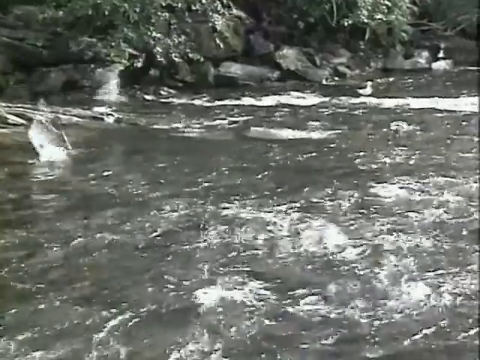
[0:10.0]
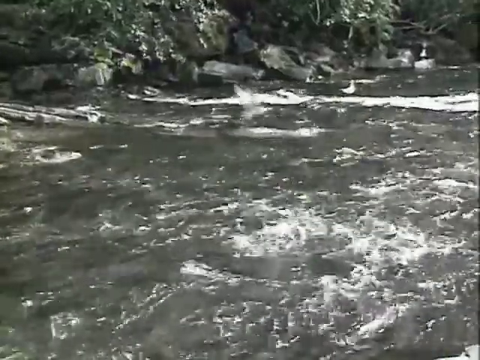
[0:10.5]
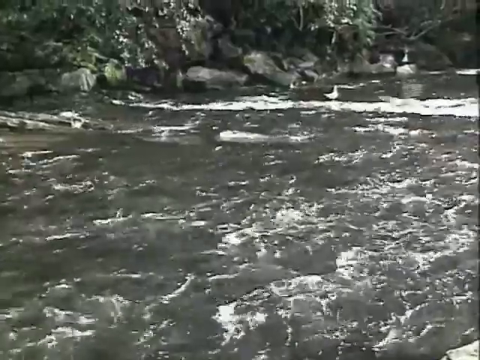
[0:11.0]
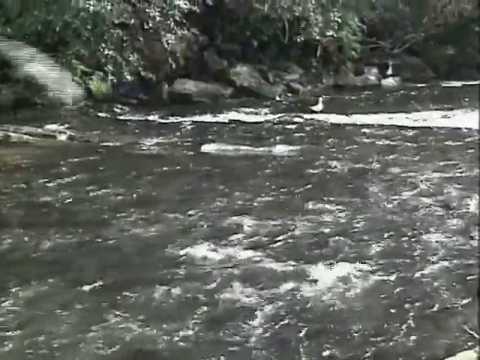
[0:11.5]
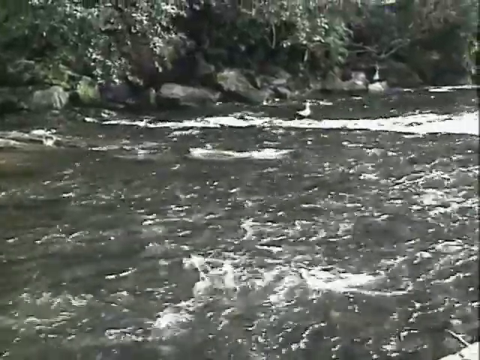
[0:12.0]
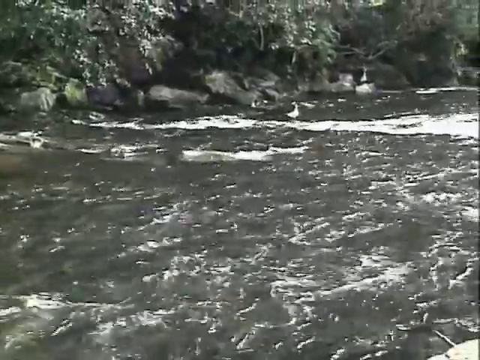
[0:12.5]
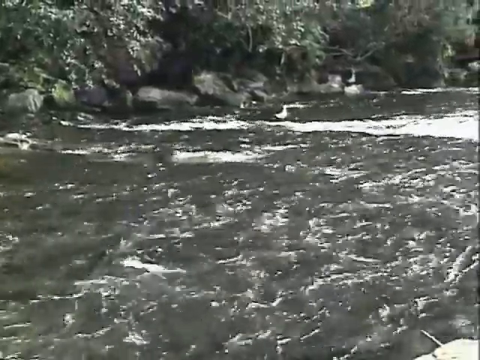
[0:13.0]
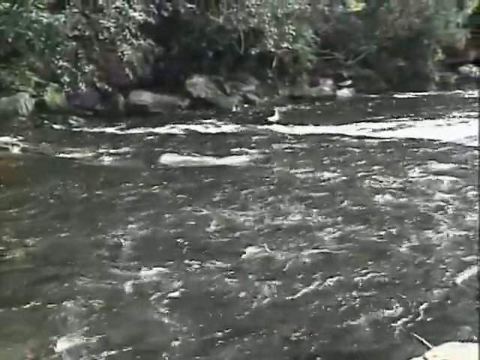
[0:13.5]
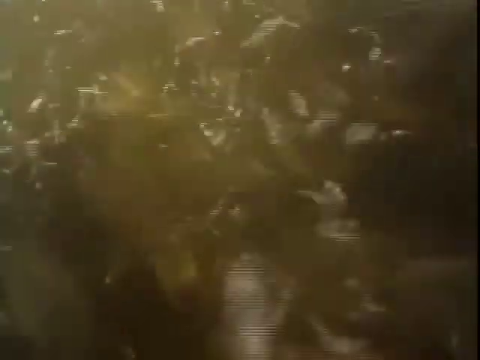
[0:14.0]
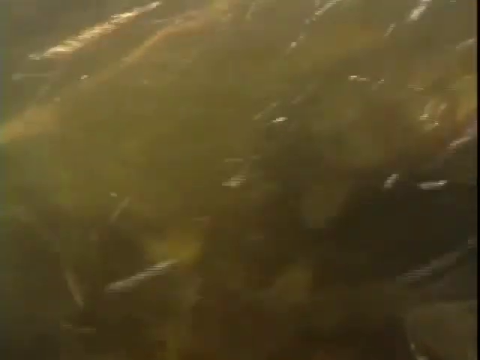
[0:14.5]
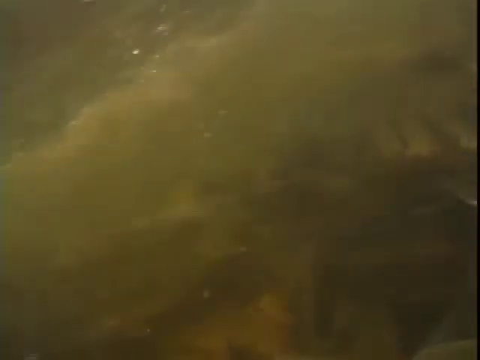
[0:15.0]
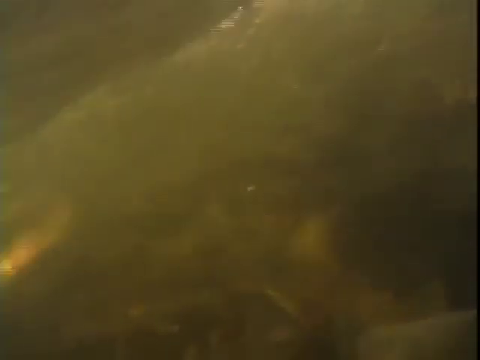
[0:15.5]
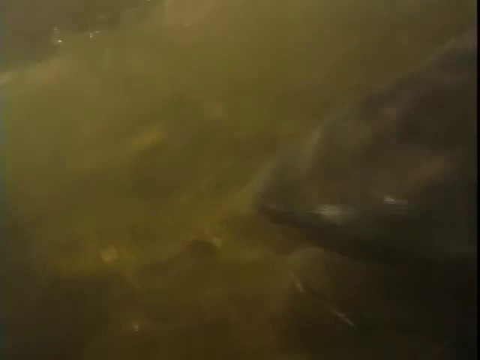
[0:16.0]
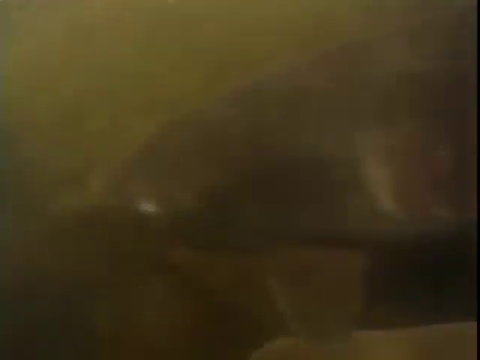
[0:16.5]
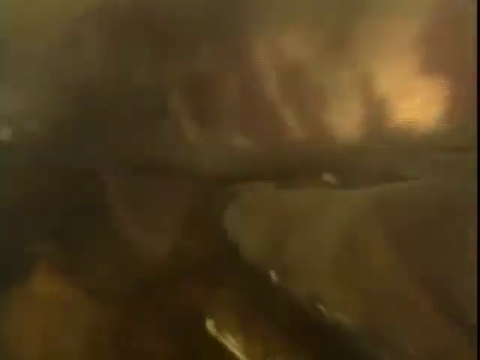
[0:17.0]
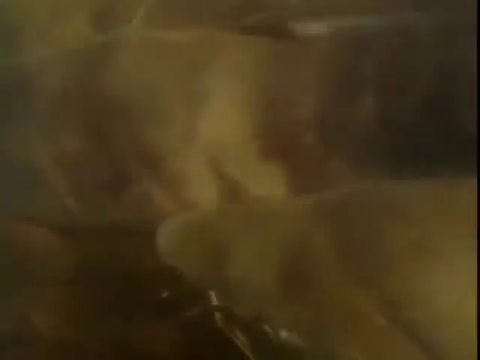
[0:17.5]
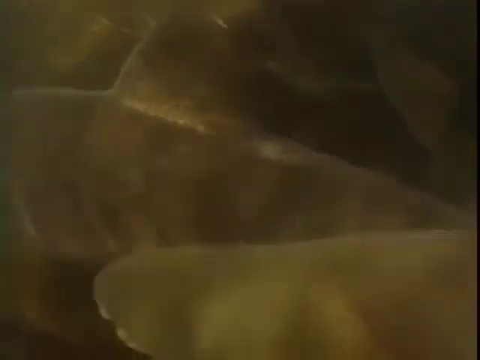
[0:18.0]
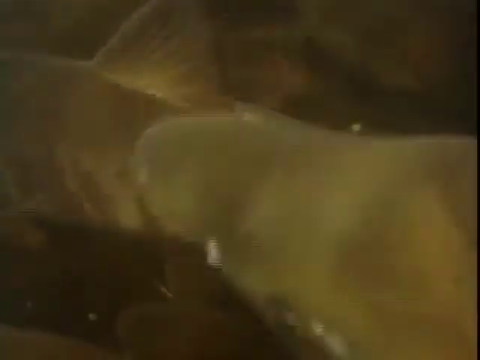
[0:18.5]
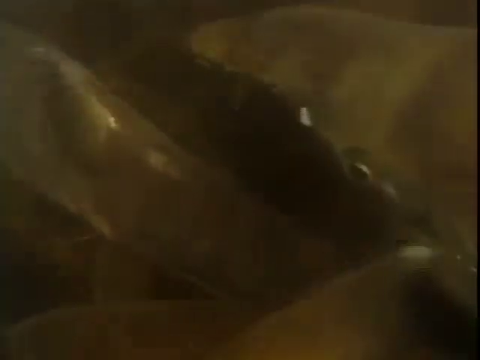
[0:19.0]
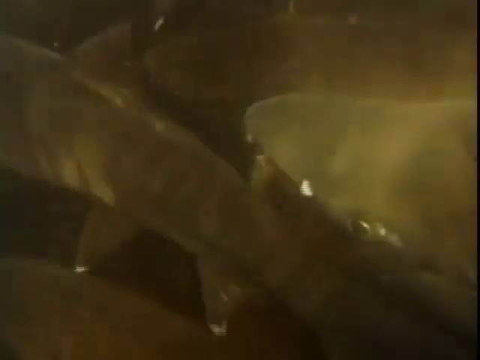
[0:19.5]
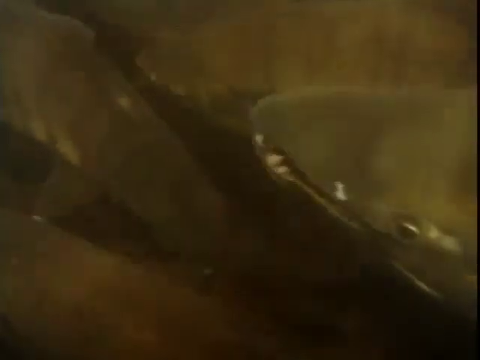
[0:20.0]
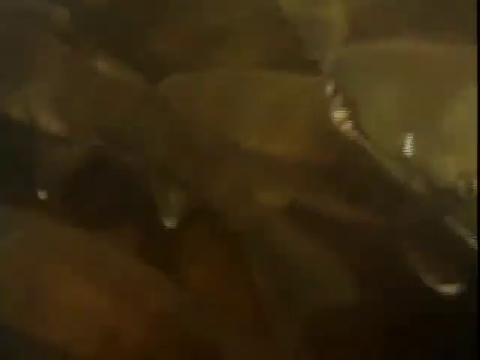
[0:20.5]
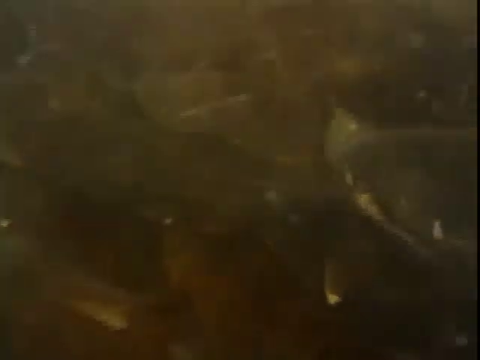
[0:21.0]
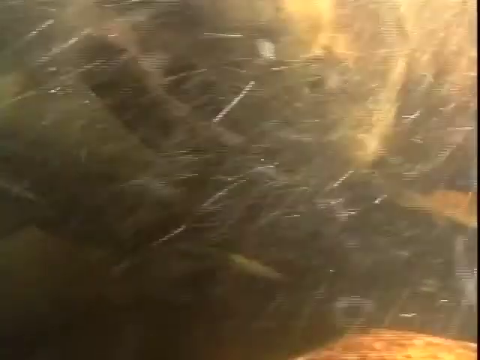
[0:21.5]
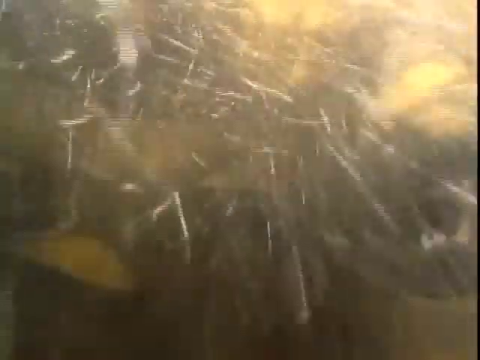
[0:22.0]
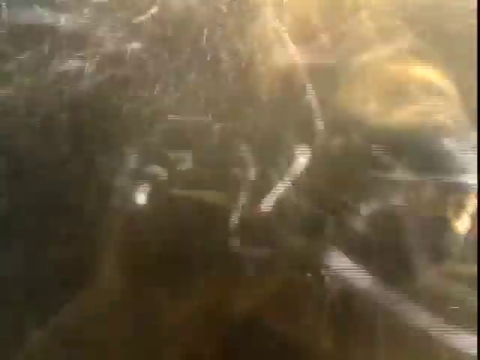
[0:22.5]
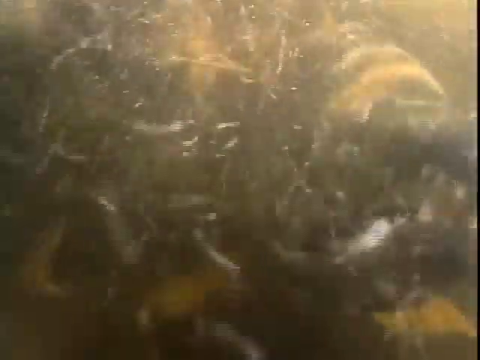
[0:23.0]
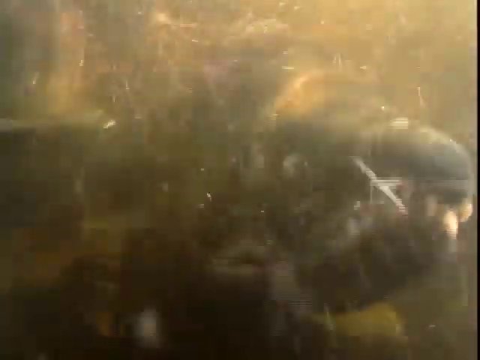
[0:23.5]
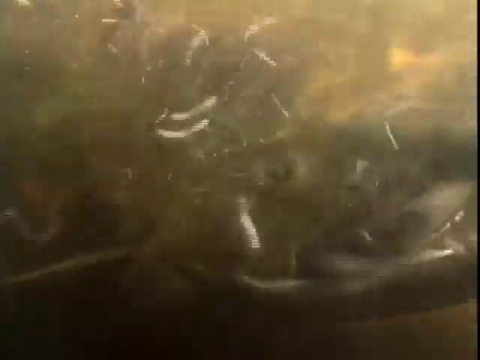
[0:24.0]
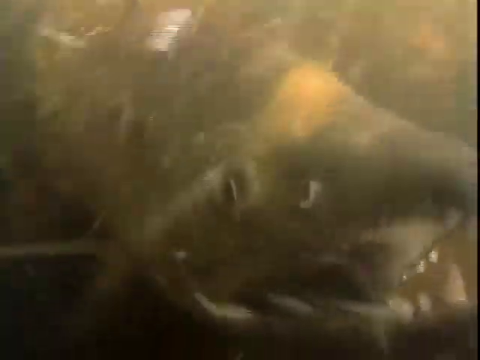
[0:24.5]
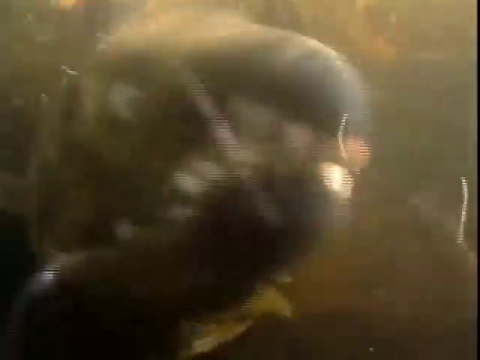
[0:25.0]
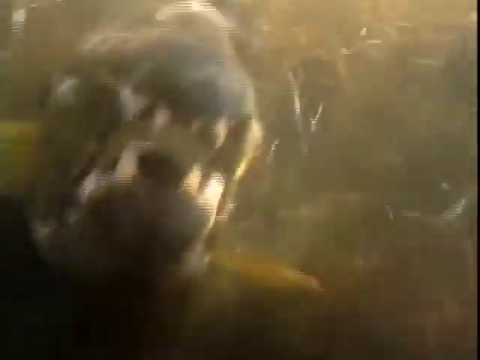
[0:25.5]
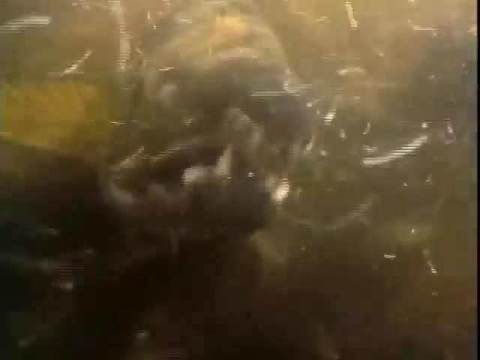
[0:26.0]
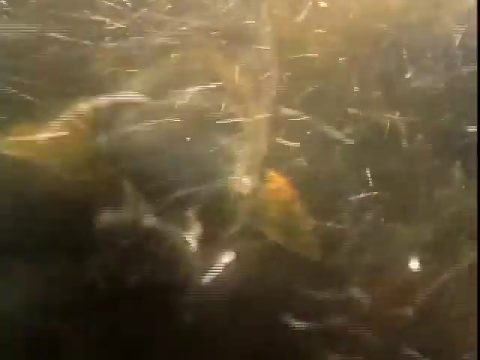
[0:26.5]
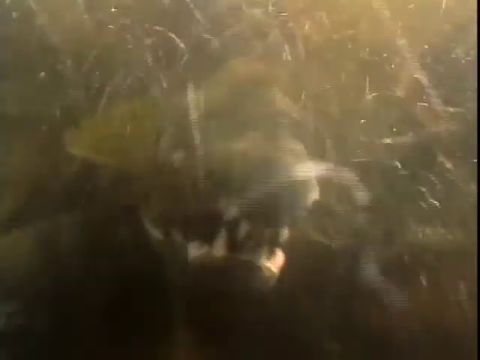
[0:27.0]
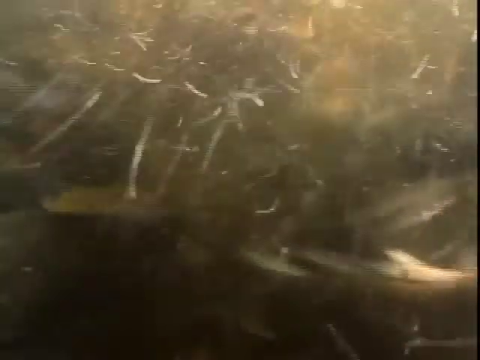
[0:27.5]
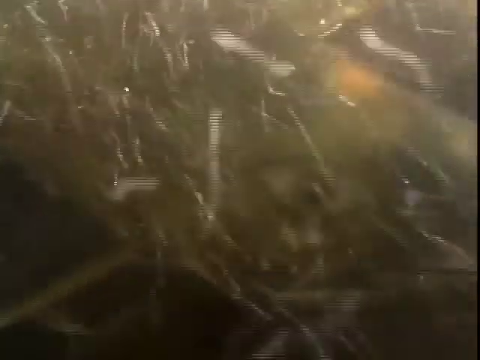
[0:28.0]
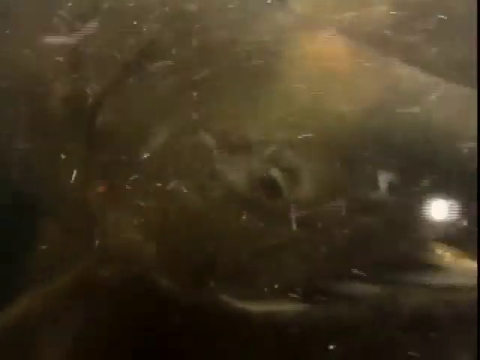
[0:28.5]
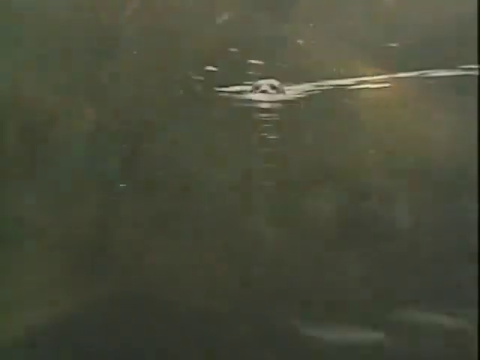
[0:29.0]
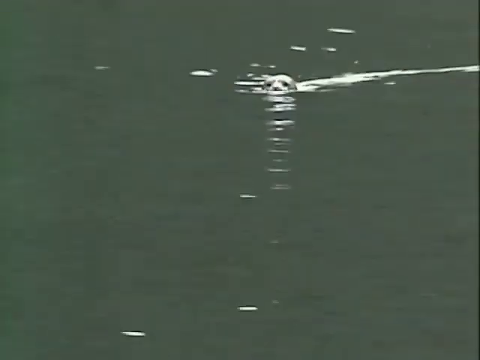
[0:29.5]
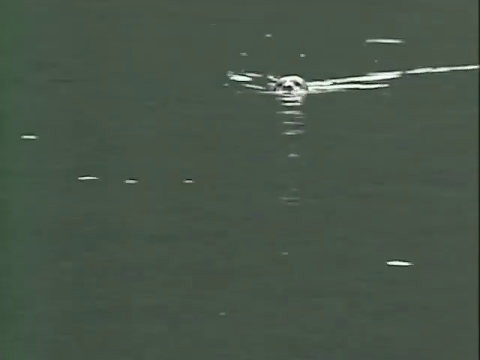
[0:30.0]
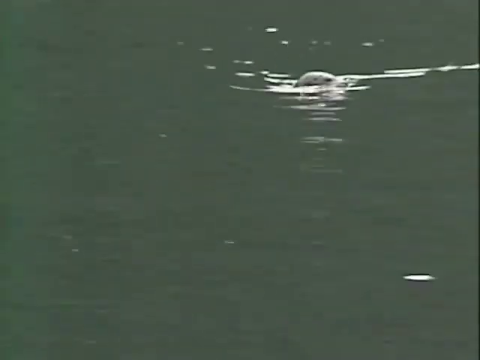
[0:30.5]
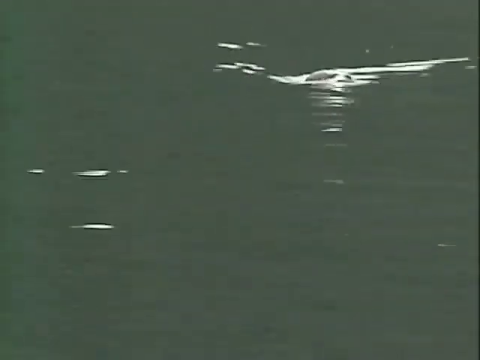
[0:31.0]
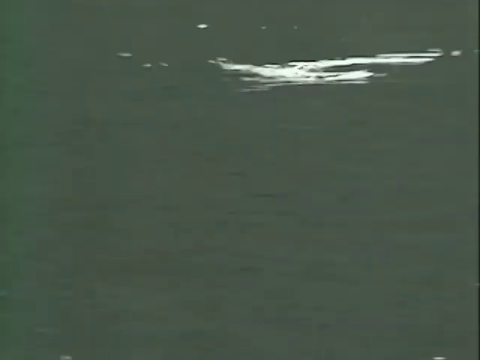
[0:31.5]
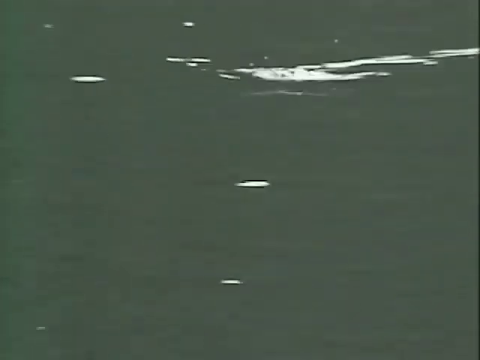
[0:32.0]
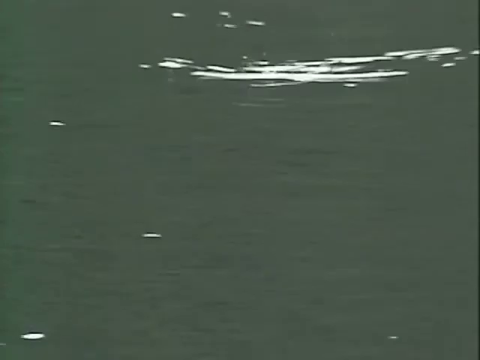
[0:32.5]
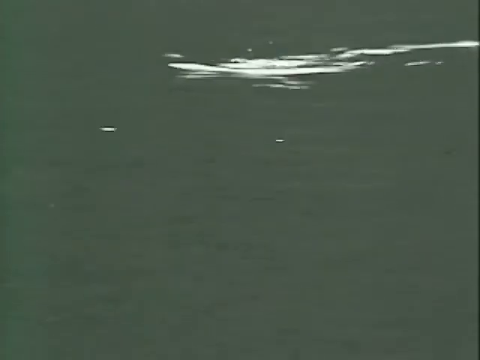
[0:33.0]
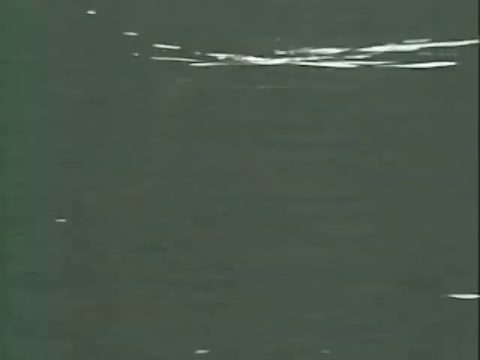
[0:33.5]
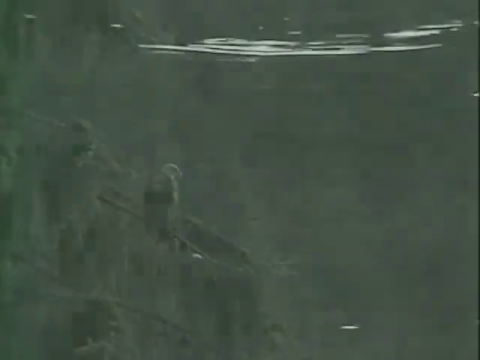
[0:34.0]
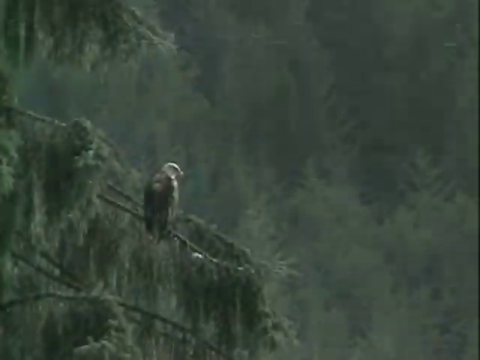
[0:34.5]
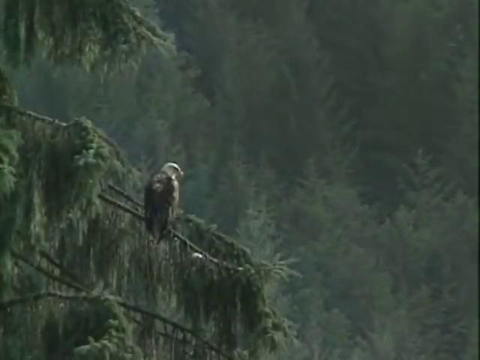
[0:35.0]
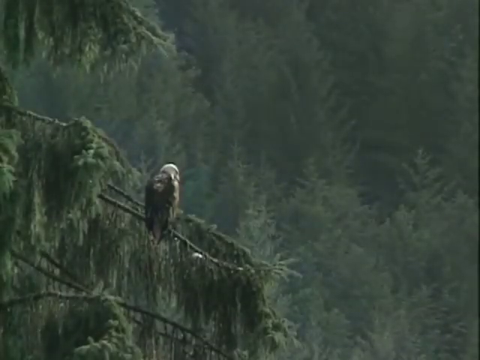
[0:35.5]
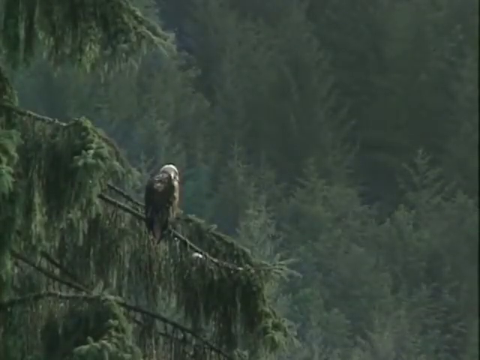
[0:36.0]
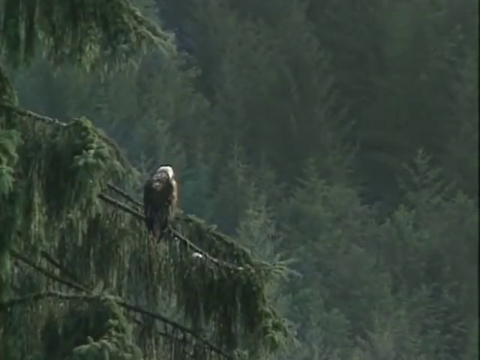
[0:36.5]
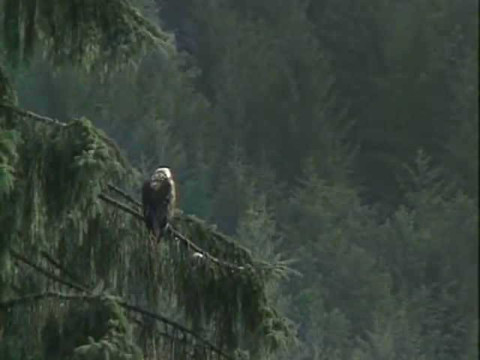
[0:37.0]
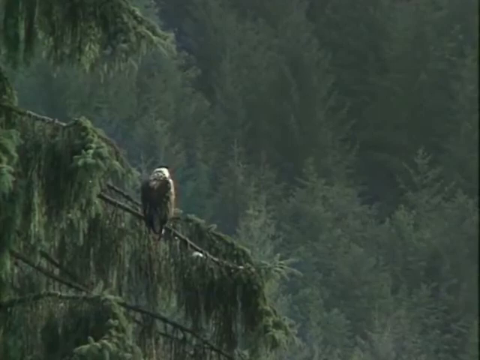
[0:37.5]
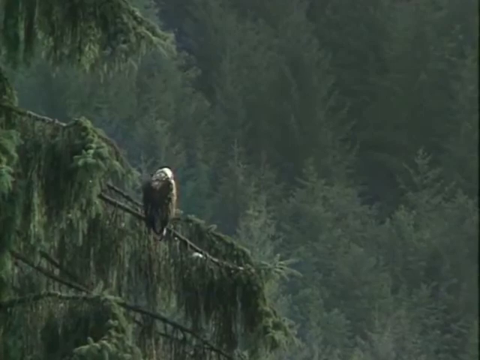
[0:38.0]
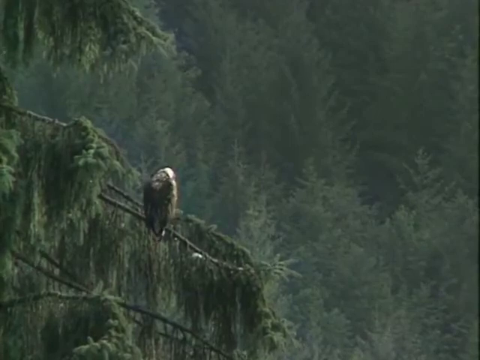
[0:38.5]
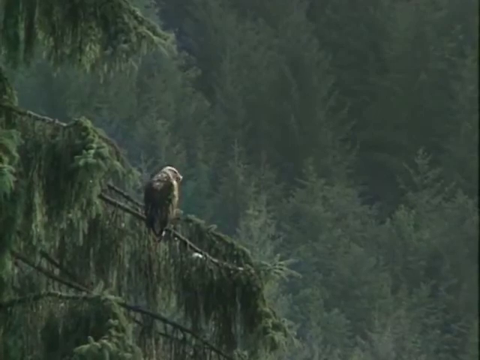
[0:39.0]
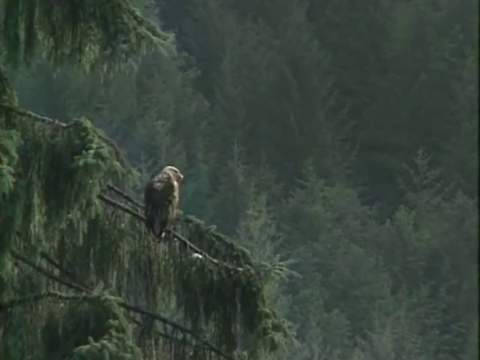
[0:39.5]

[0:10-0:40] The camera hovers above a wide section of river that appears to flow from the lower left toward the upper right of the screen. A couple of birds fly over the shot. An underwater shot follows: the water is murky and brown, and a mass of darker gray fish is seen from above, then from the front. One of the fish has a mouth full of long white teeth, and one fish, surrounded by other fish, moves its mouth up and down. Next, a shot hovers over mostly calm water, where the head of what looks like an otter swims before diving back beneath the water. Then a bald eagle sits on a branch high up in a tree; the branch leans downward and to the right, and tall trees are in the background.